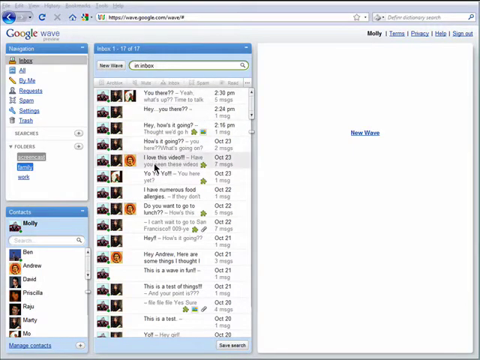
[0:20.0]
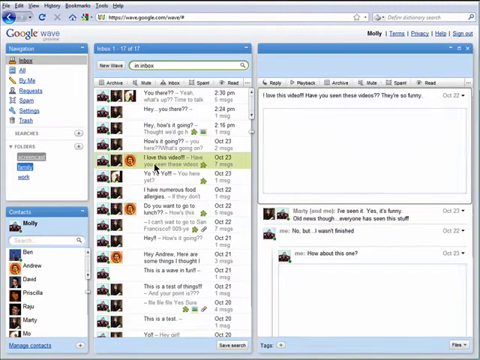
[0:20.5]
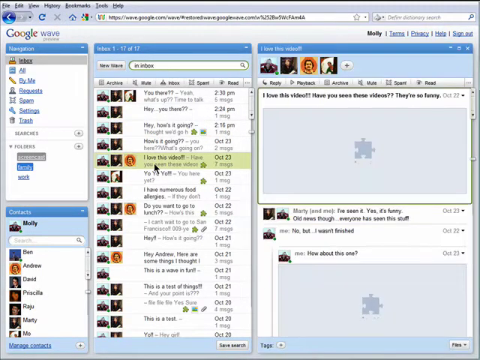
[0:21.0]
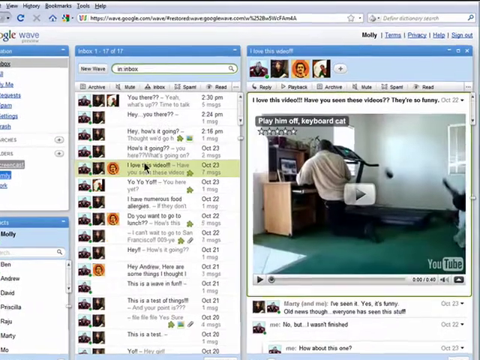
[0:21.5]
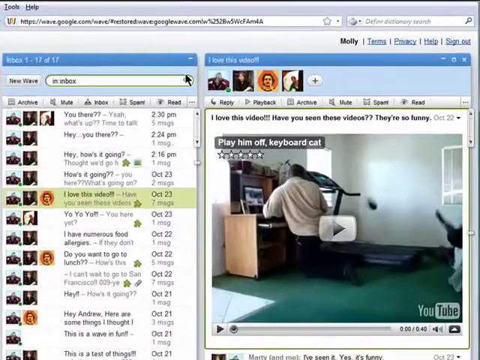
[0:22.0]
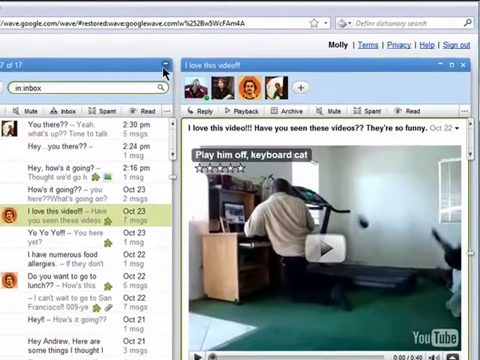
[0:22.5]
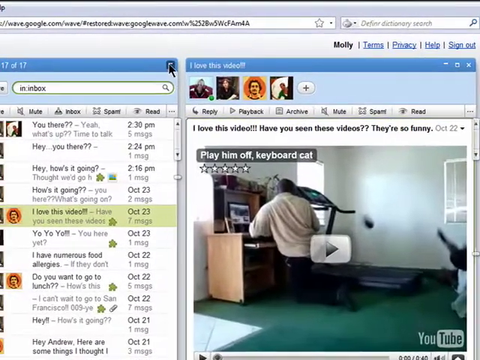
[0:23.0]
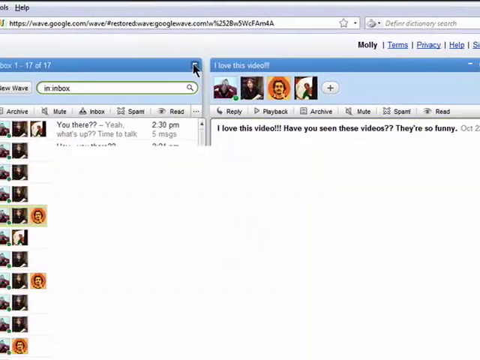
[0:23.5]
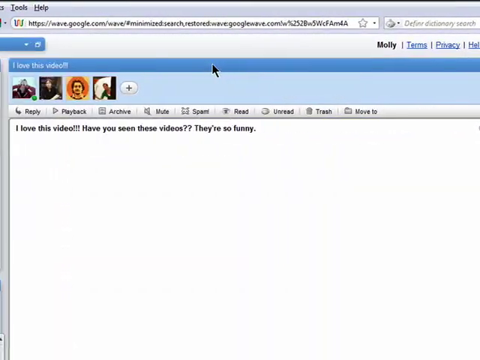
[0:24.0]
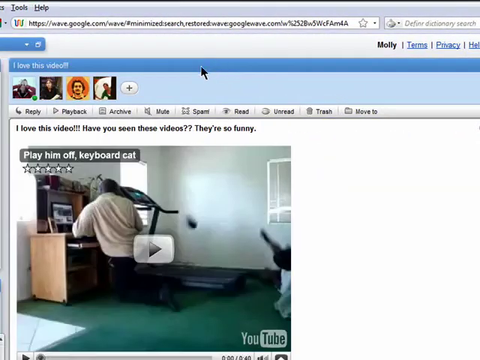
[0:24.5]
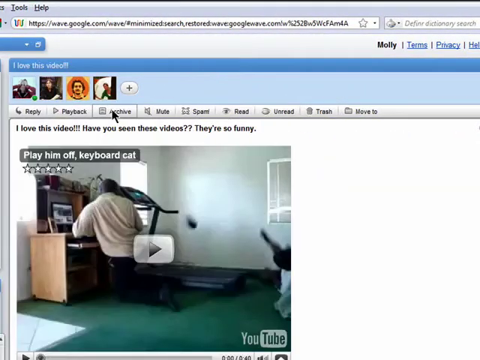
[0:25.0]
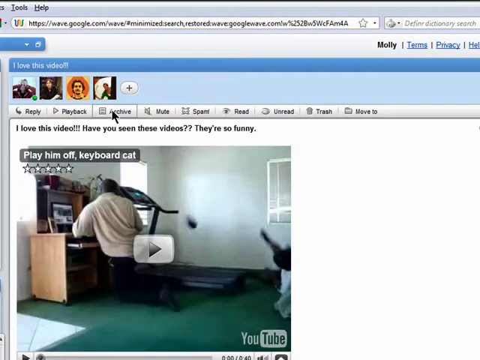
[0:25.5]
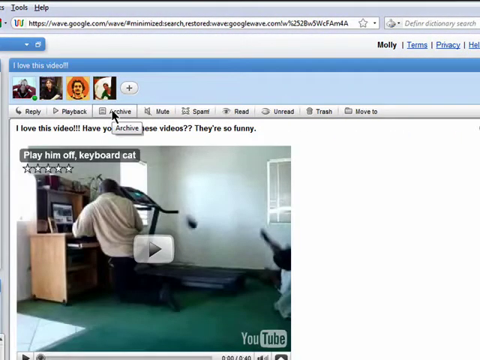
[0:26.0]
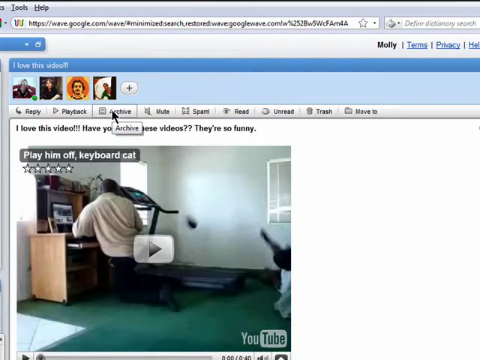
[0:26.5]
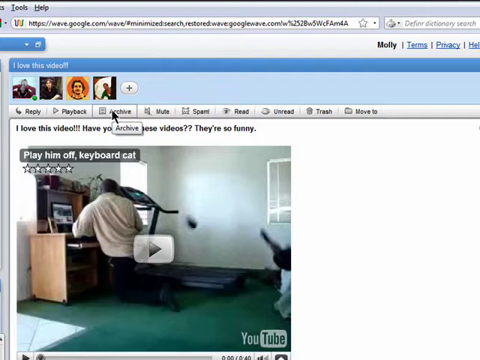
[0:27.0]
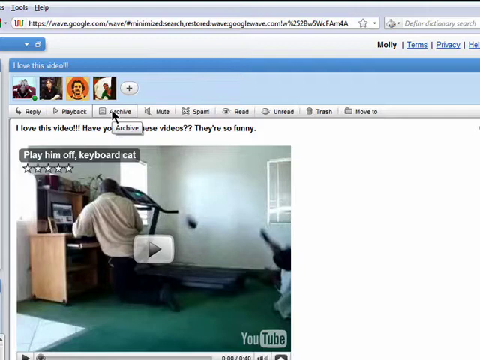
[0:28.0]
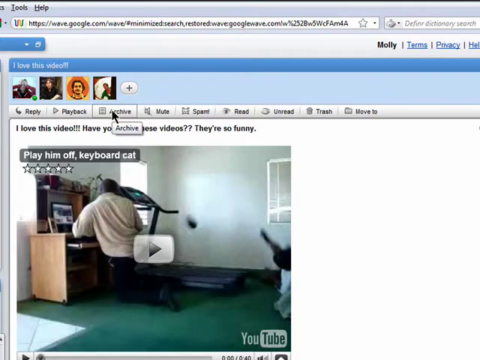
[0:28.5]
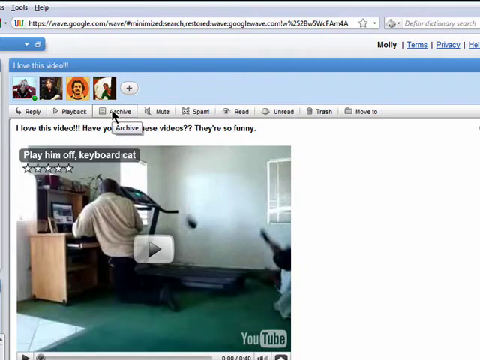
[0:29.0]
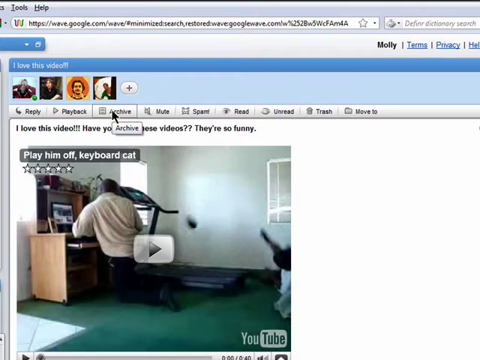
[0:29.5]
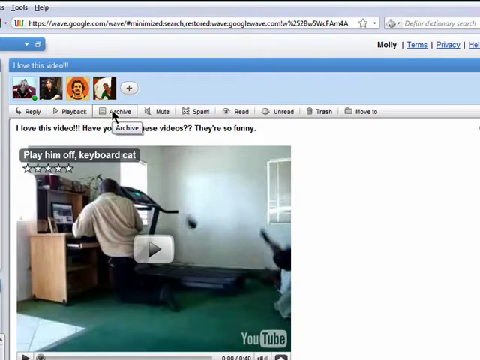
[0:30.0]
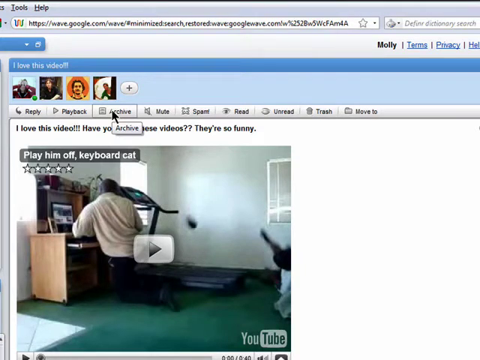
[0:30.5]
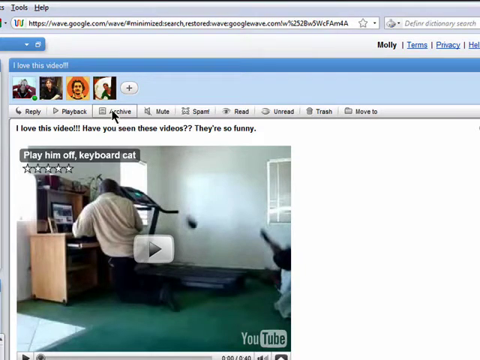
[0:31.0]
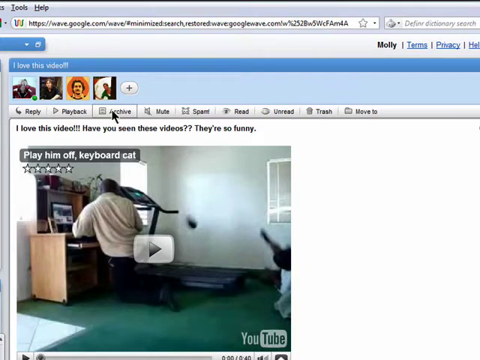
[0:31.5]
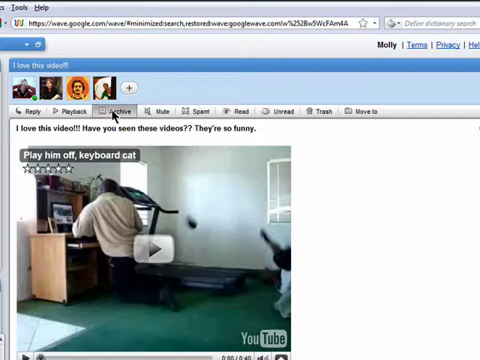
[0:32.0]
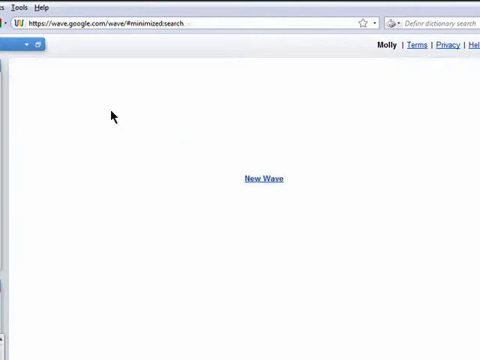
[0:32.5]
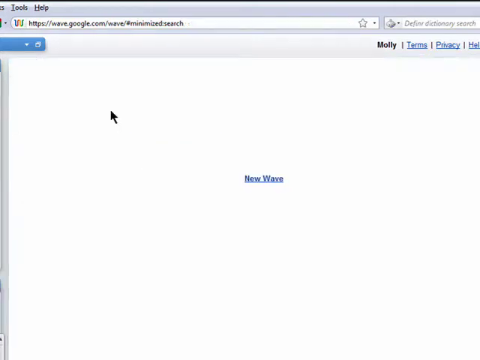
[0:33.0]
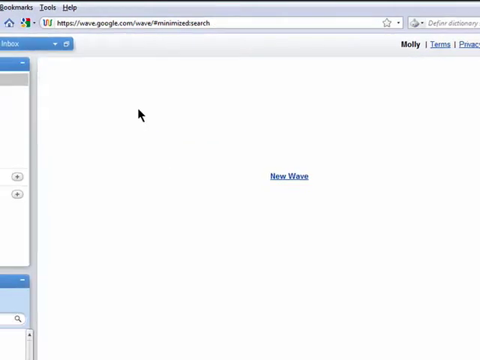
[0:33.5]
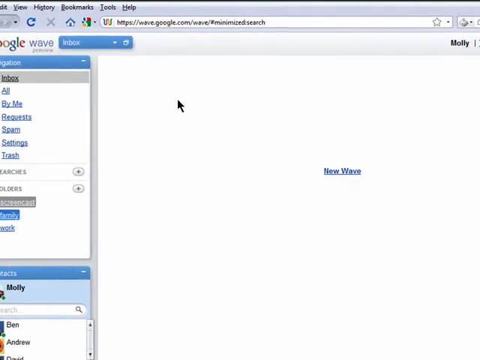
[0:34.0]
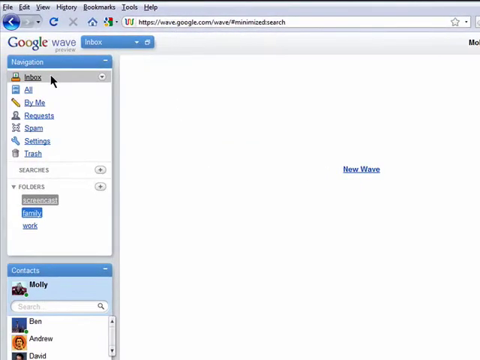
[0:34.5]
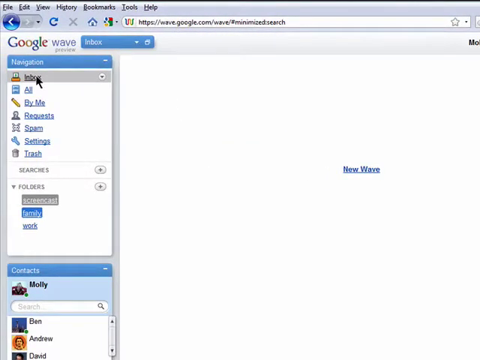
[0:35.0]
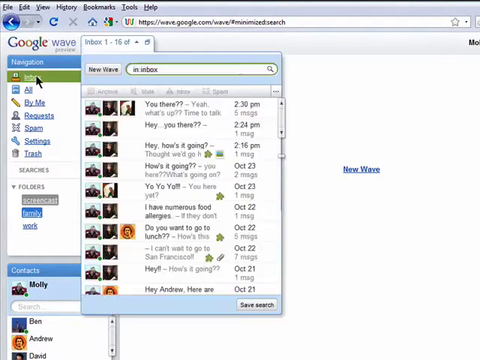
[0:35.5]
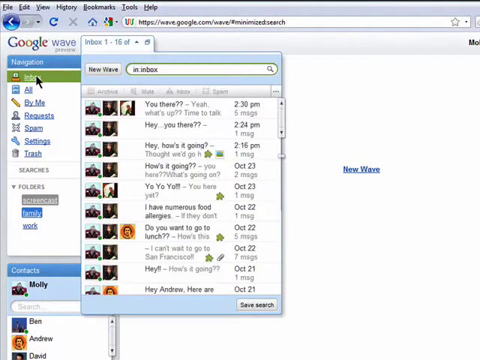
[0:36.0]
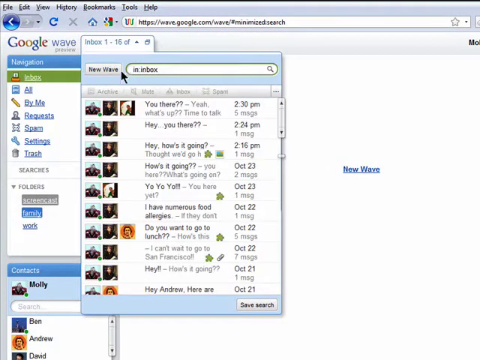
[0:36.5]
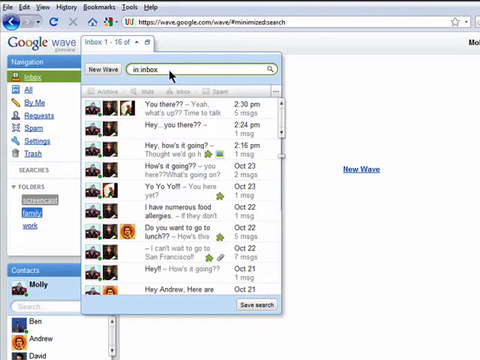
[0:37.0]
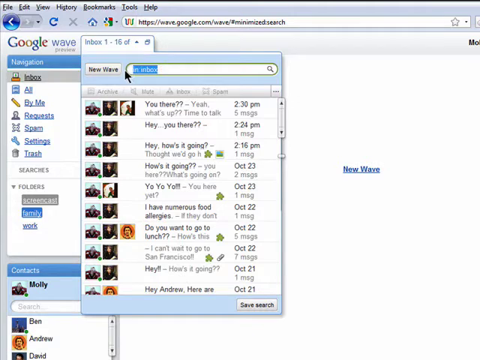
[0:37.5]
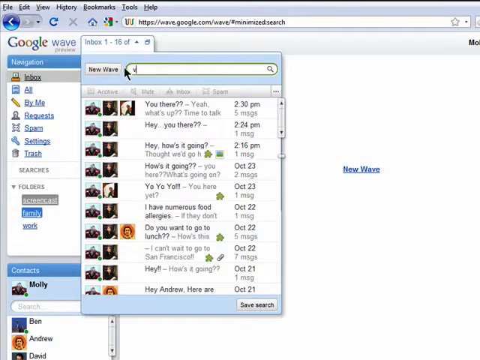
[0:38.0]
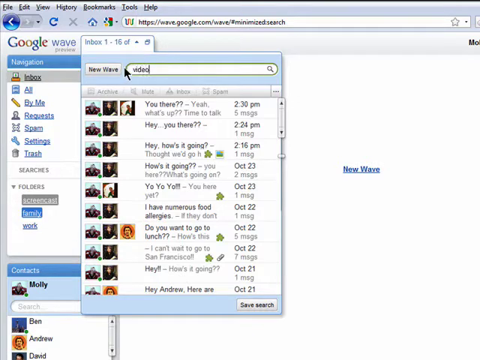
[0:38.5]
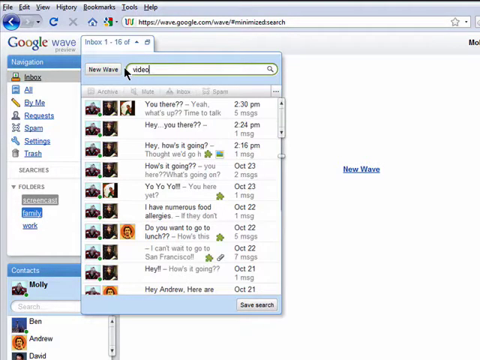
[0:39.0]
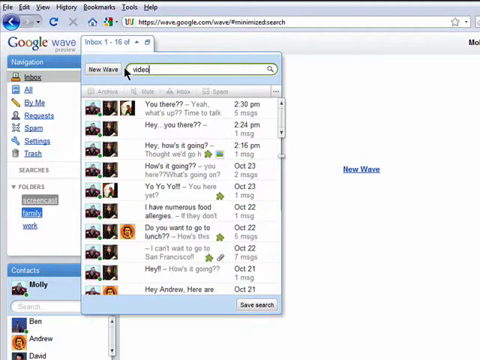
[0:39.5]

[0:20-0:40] The guy scrolls down about five emails to one that says "I love this video", with three icons to its left; on the right is the date, October 23rd, and underneath the date it says seven images. Each email has icons, most with three and some with two, then a little snippet of the email itself, with the date and the number of included images to the right. He clicks "I love this video" and zooms in on the right, where it looks like somebody is sitting at a desk in a YouTube video that says "play them off keyboard cat". At the top, another blue element says "I love this video", with options including replay, playback and archive. He clicks back on "I love this video", and someone types "I love this video. Have you seen these videos? They're so funny." At the top right it says "molly", with blue links for terms, privacy and help. He then goes to archive, apparently to archive the message; hovering over it shows a little box that says "archive". He clicks something and the view goes to "new wave", shown in the middle with a hyperlink. He pans left to the area under the navigation, where the inbox is highlighted in green. With his cursor over it, he clicks it again. He clicks into a field where he can type, highlights and deletes its contents, and starts typing "video"; it looks like four results pop up as he searches.